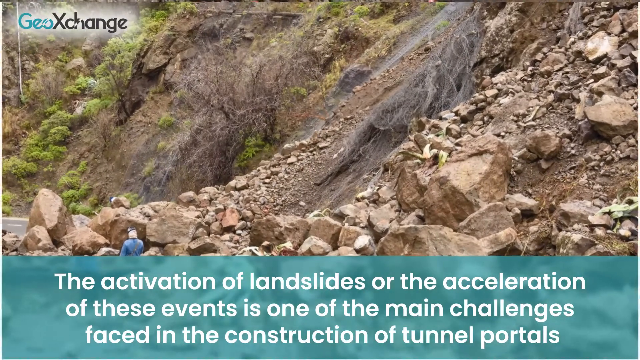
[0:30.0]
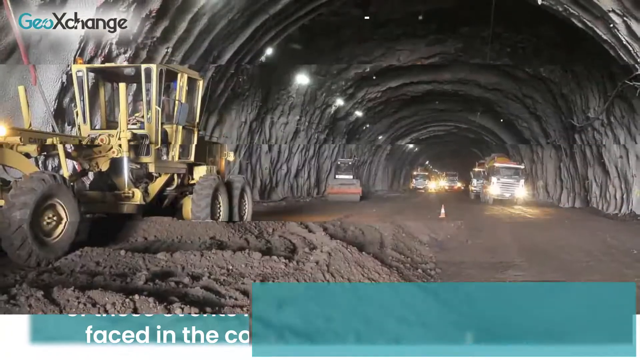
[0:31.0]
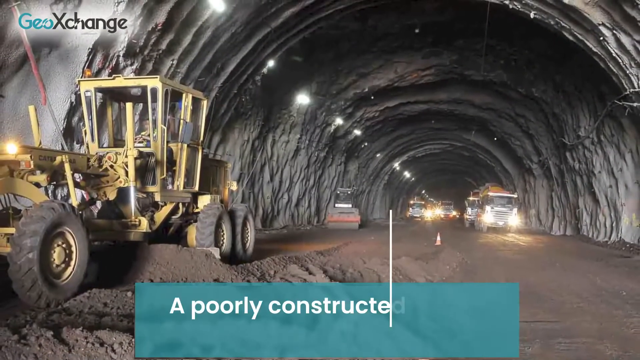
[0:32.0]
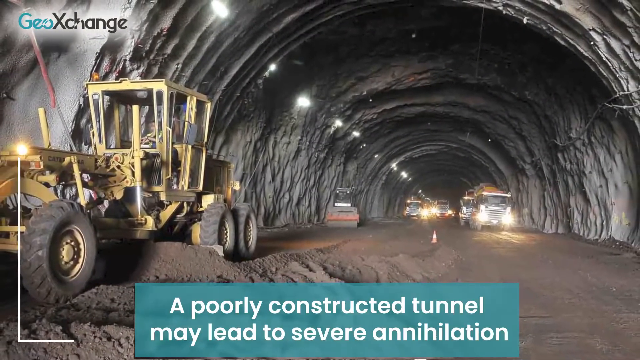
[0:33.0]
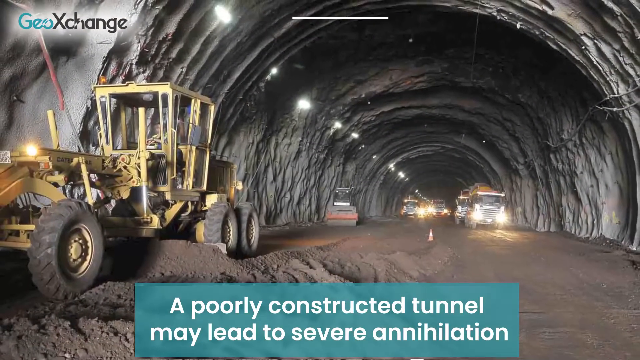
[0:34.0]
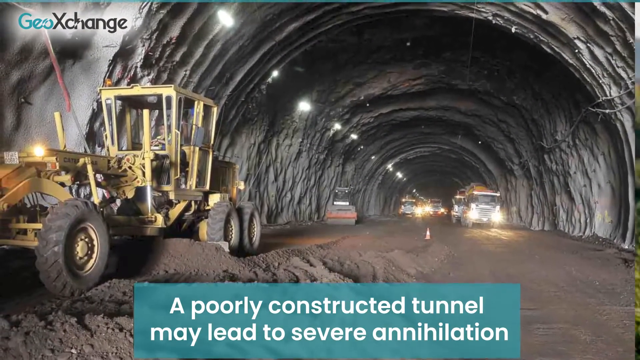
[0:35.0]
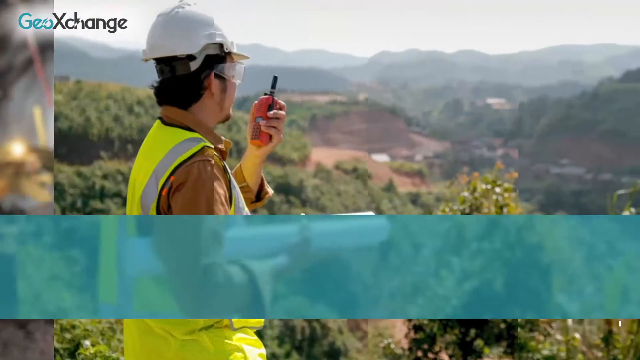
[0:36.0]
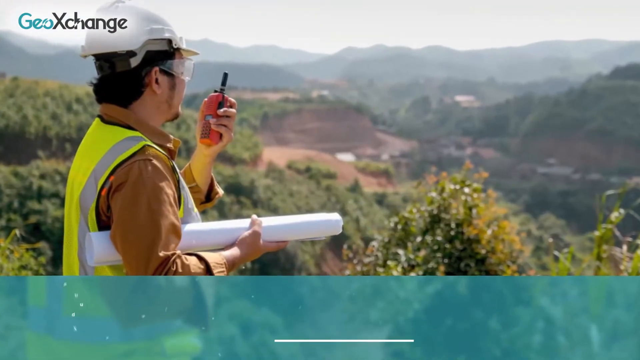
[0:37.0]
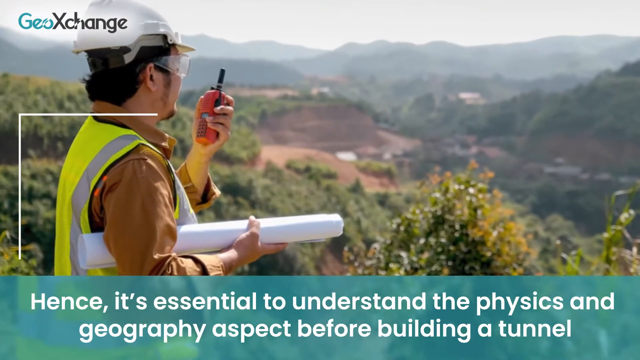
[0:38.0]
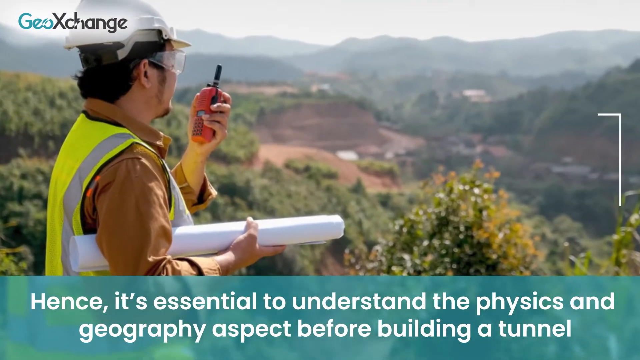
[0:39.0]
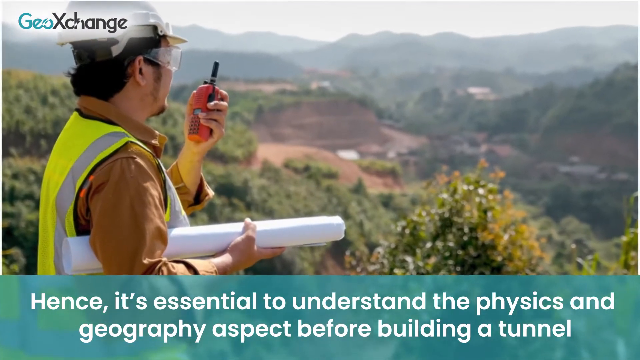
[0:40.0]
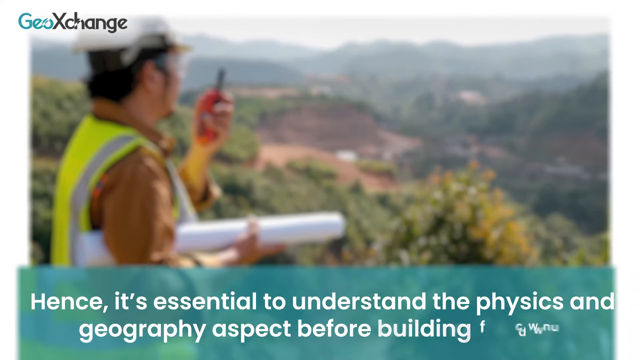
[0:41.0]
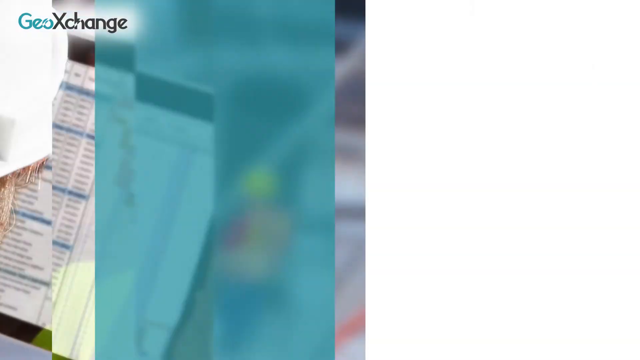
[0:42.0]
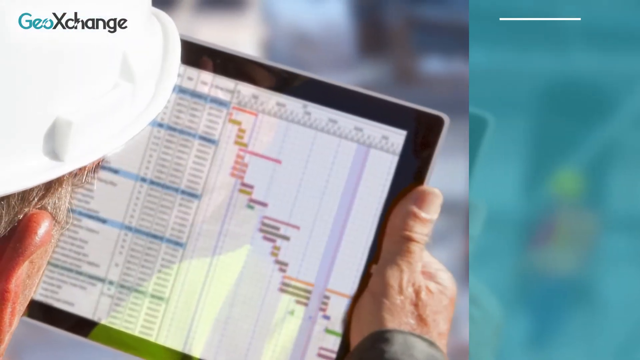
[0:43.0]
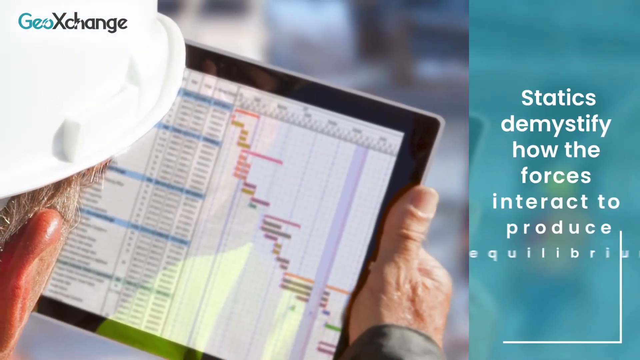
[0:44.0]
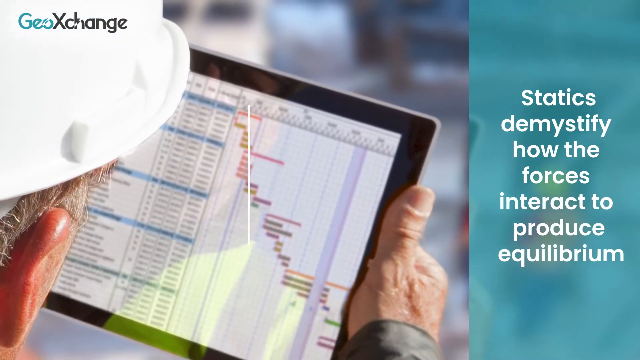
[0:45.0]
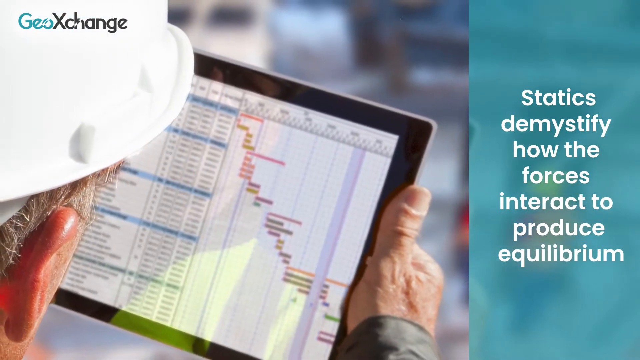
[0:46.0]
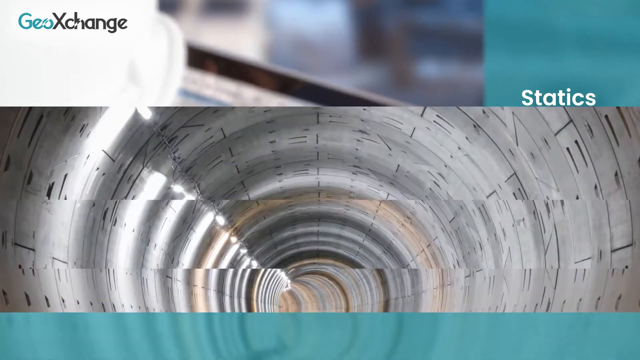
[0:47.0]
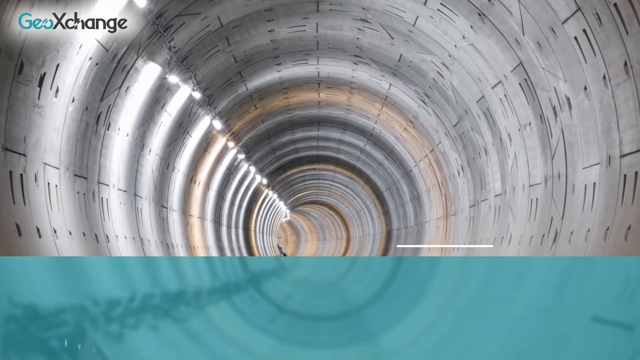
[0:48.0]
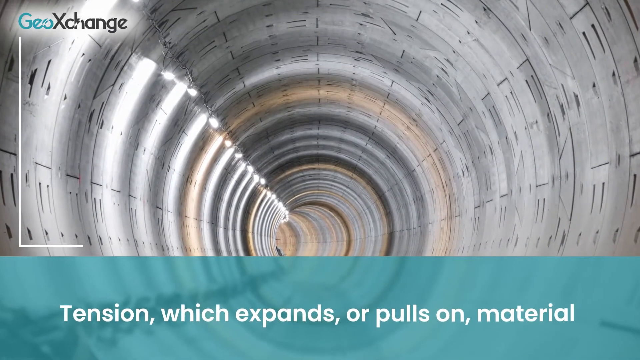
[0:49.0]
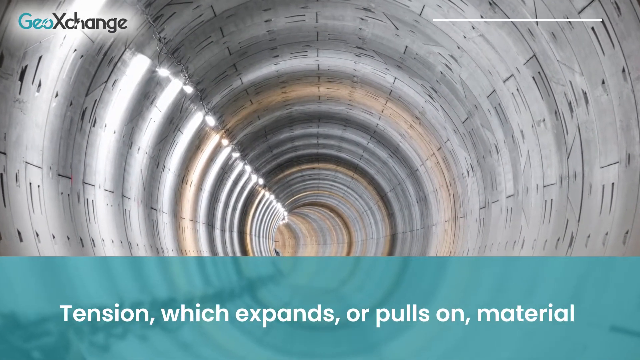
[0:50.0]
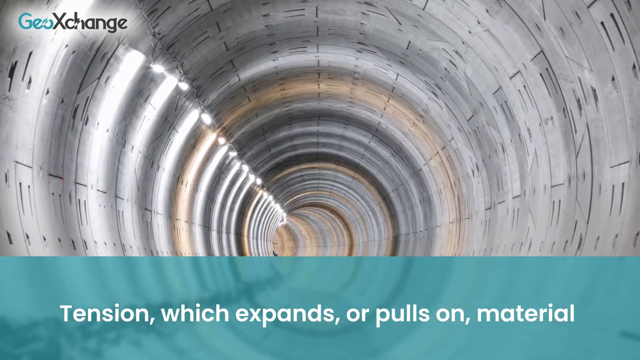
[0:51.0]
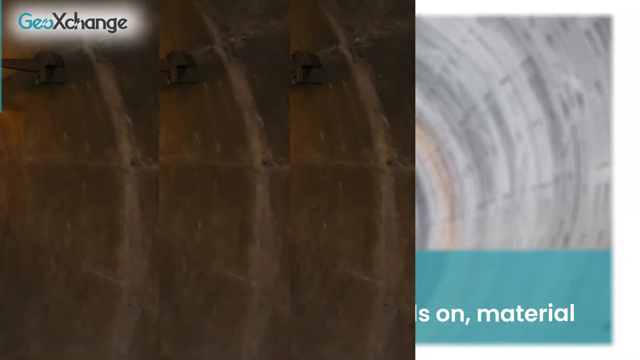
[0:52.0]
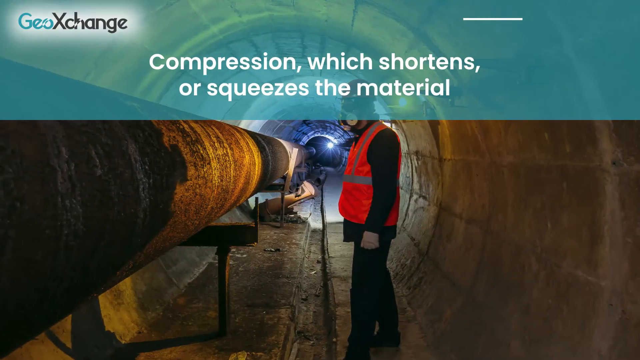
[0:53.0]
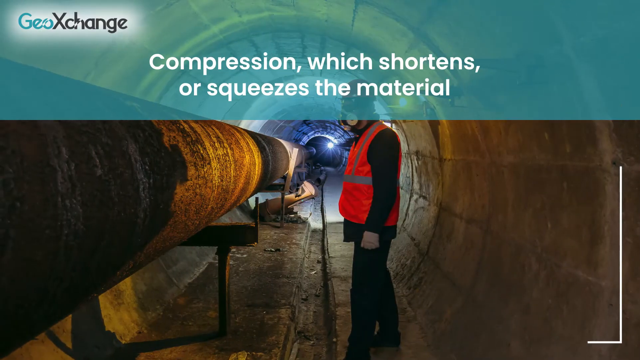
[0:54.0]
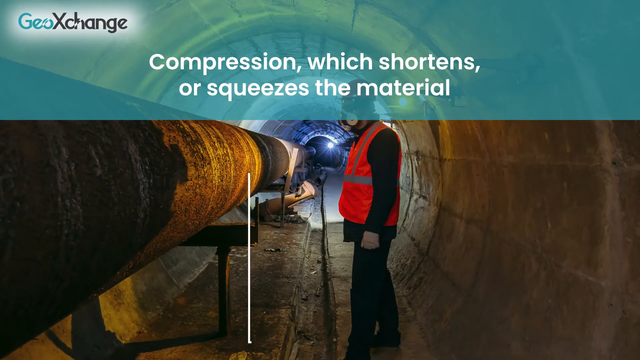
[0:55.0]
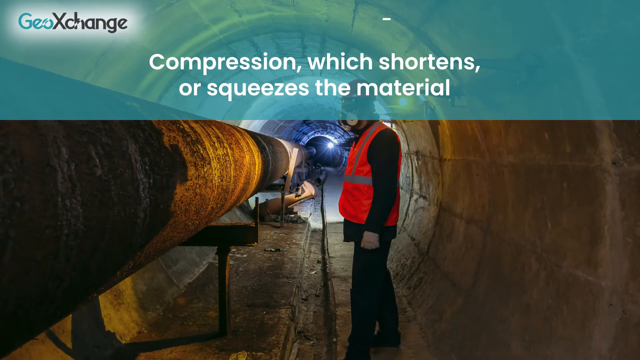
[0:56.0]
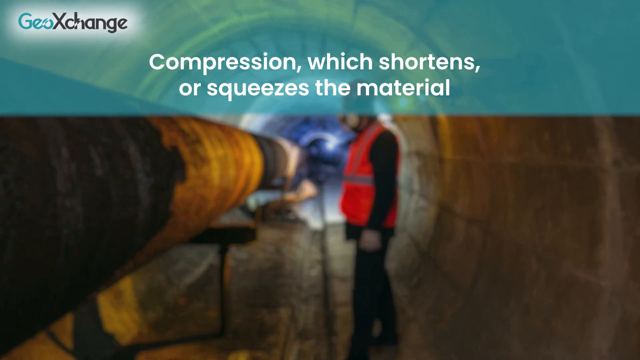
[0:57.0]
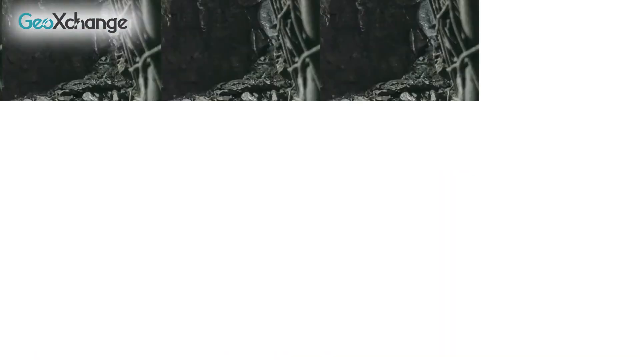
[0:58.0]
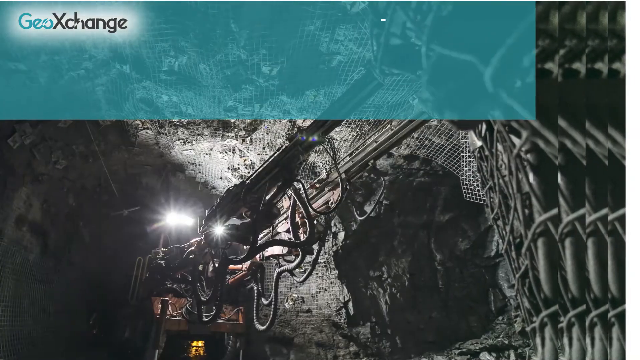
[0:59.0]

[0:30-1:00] The image transitions to a tunnel that is being constructed: a semi-circle shaped tunnel with lights going through it and lots of machinery and trucks in the background. In the foreground on the left is a yellow digger, and a phrase at the bottom reads "a poorly constructed tunnel may lead to severe annihilation". Next is an image of a construction worker standing overlooking a construction site. He holds a large scroll of white paper in his hand and a walkie-talkie, and wears a high-vis vest, safety goggles and a safety helmet. At the bottom of the screen it reads "hence it's essential to understand the physics and geography aspect before building a tunnel". Another image shows a construction worker wearing a construction hat, holding an iPad and looking at what looks to be statistics, graphs or Excel sheets, with a statement at the side reading "statics demystify how the forces interact to produce equilibrium". The next slide shows the tunnel with stone panelling on the sides and the statement "tension which expands or pulls on material", followed by "compression which shortens or squeezes material". The image on this slide shows a construction worker wearing a high-vis vest, a safety mask and a hat, standing in a tunnel observing what looks to be a large pipe. It then transitions to another image with the statement "shearing which causes parts of a material to slide past one another in opposite directions", showing a large piece of machinery with a light going into the tunnel.